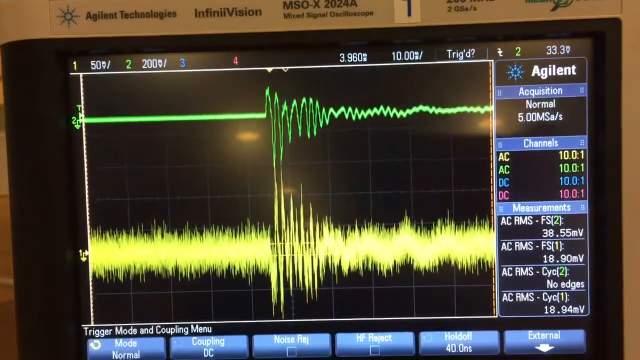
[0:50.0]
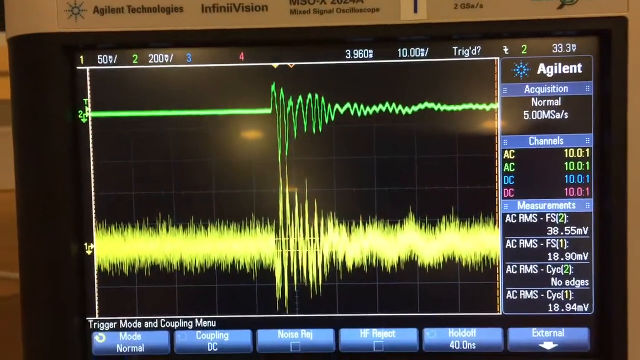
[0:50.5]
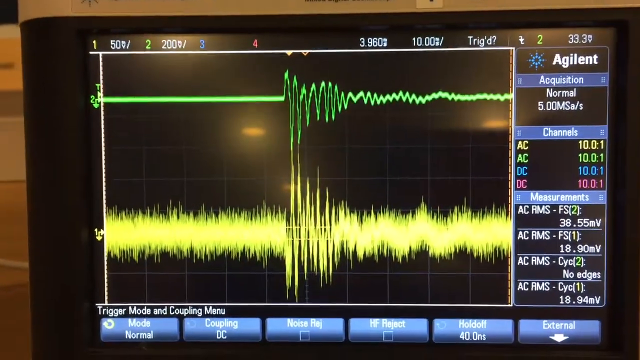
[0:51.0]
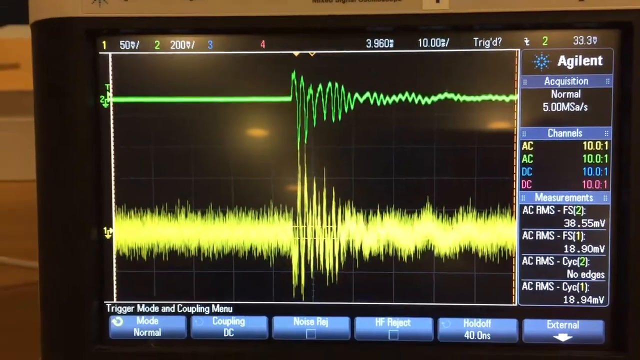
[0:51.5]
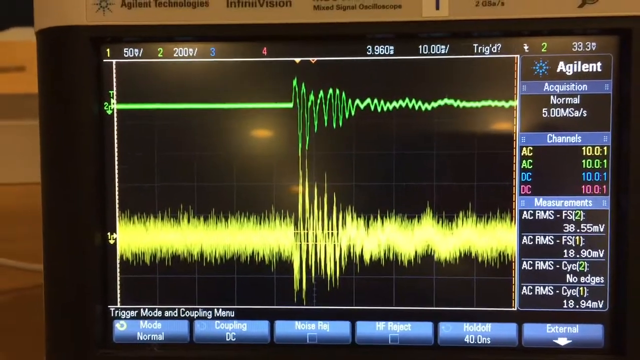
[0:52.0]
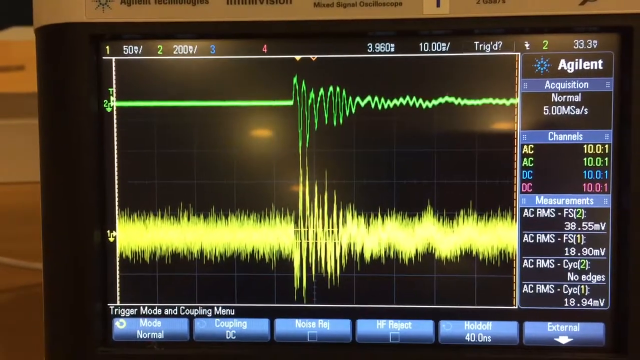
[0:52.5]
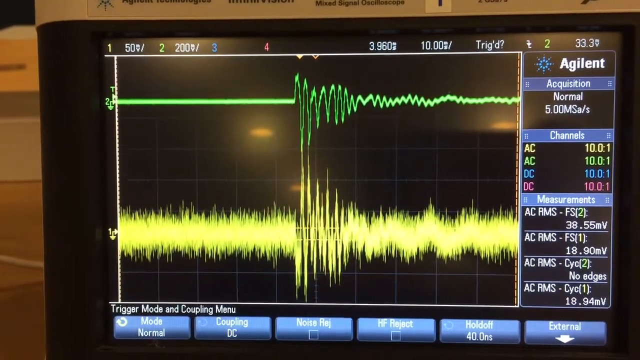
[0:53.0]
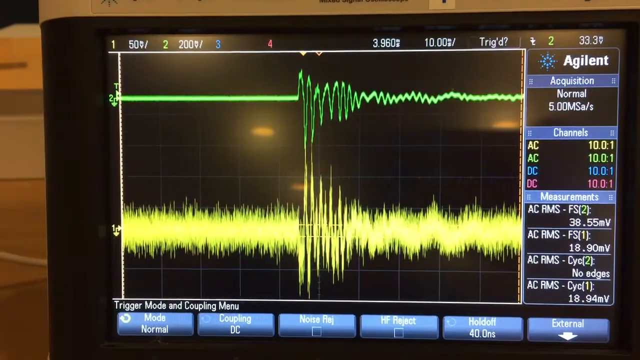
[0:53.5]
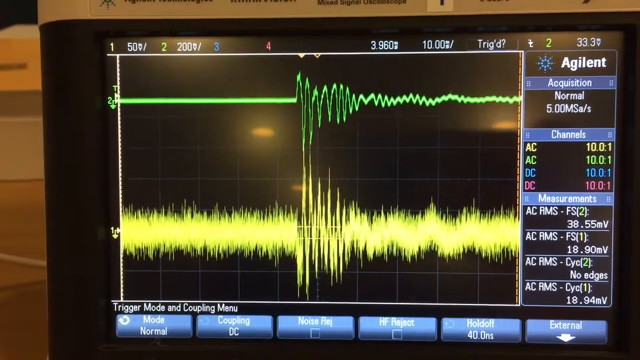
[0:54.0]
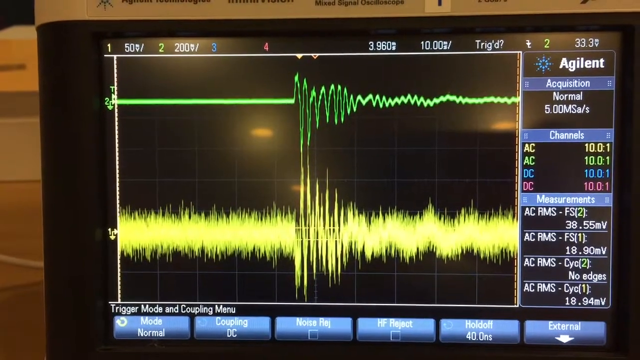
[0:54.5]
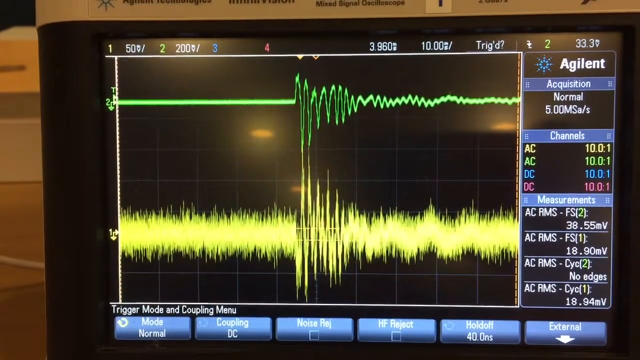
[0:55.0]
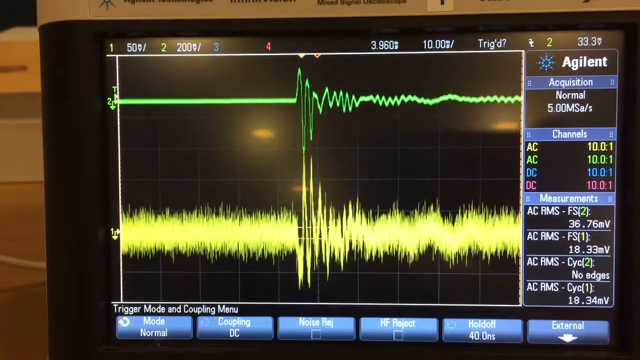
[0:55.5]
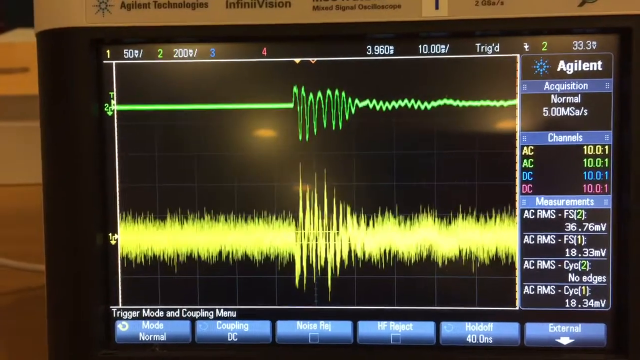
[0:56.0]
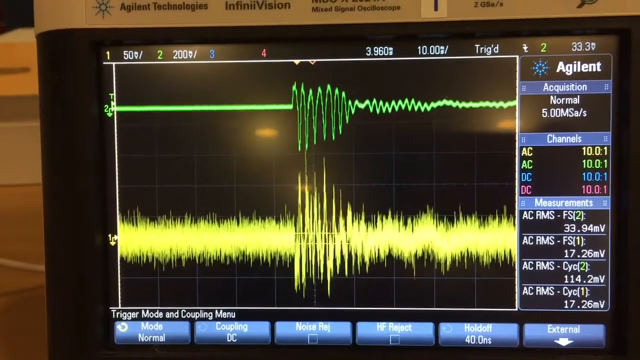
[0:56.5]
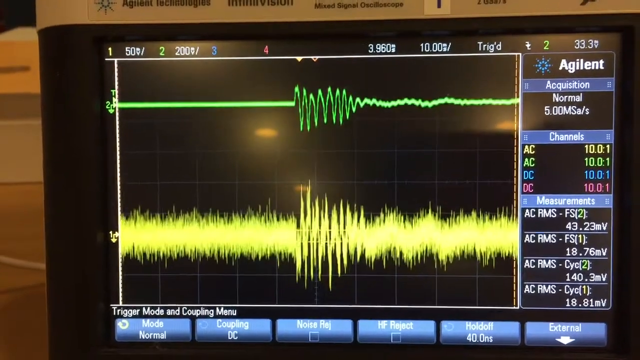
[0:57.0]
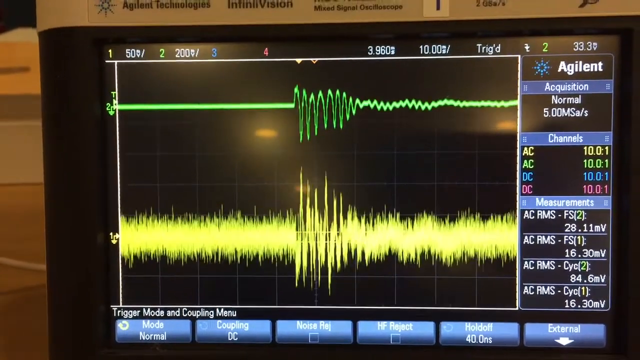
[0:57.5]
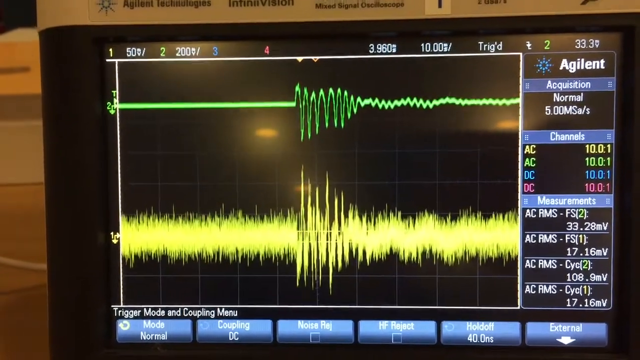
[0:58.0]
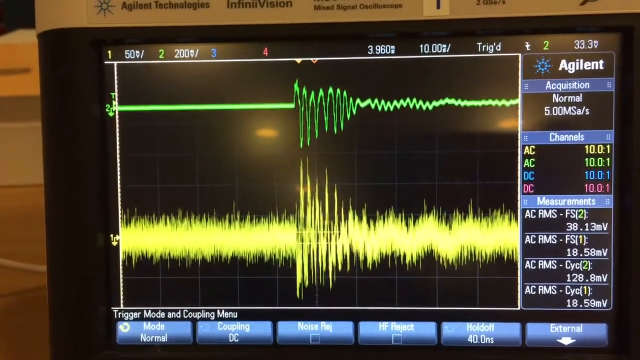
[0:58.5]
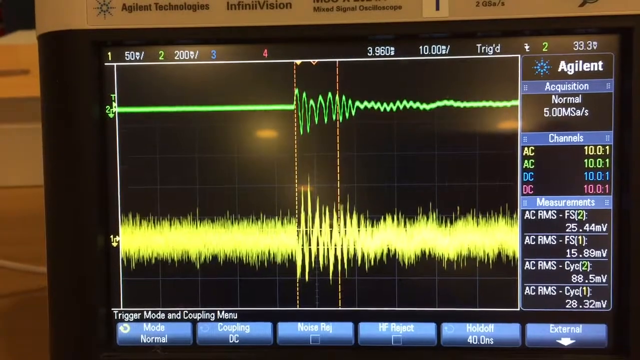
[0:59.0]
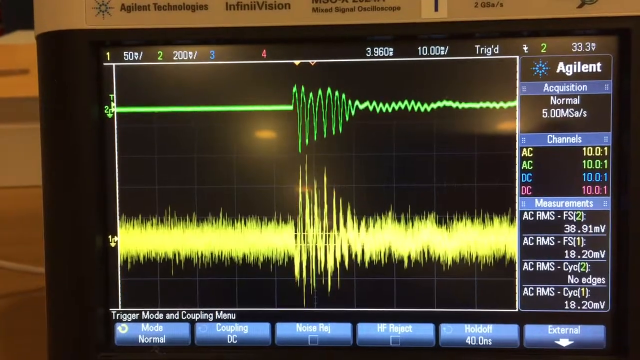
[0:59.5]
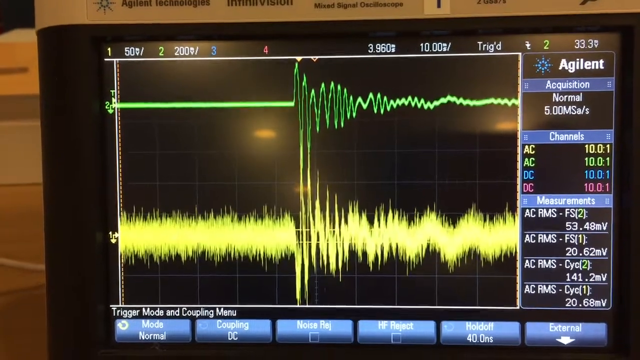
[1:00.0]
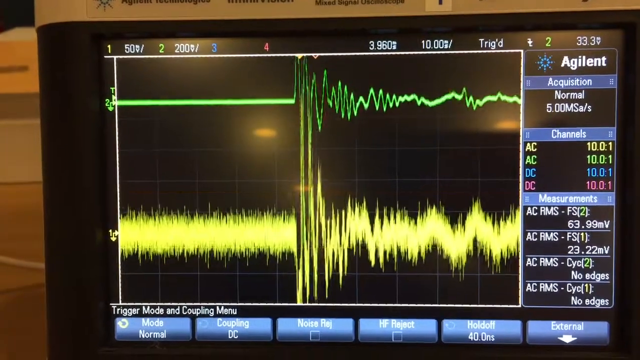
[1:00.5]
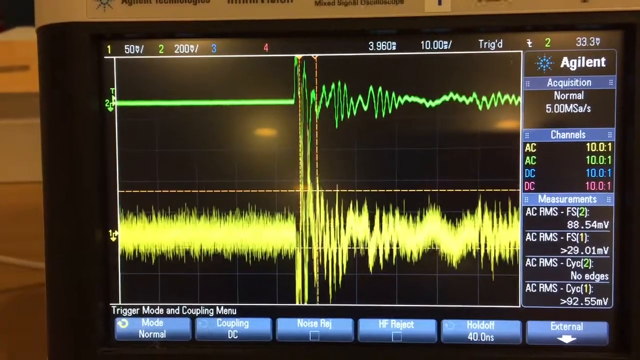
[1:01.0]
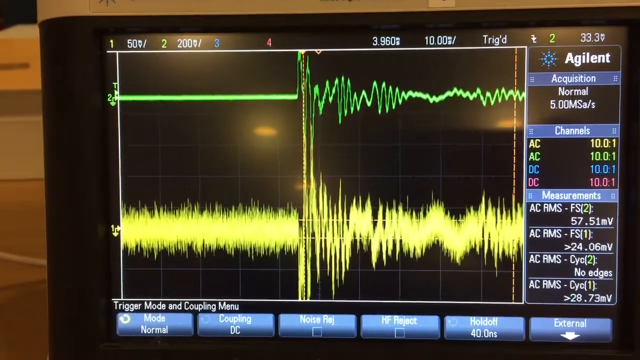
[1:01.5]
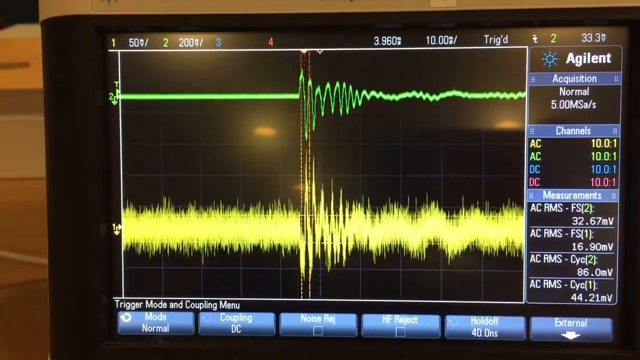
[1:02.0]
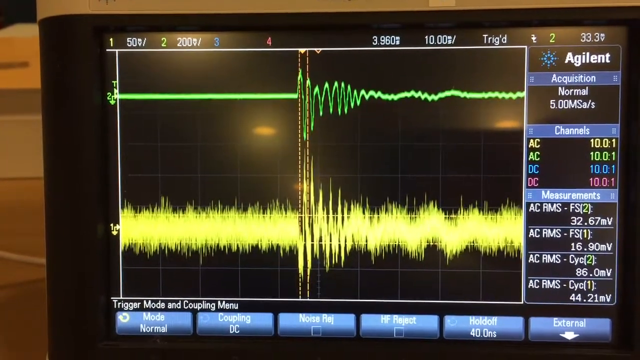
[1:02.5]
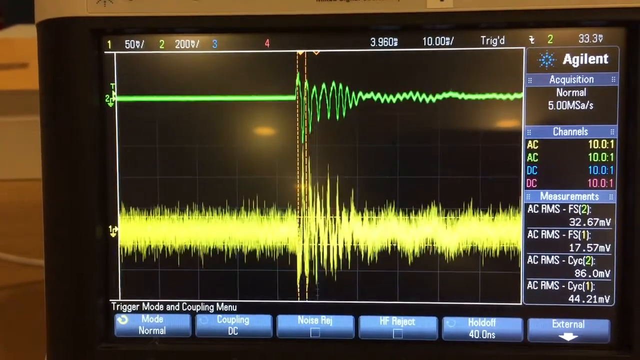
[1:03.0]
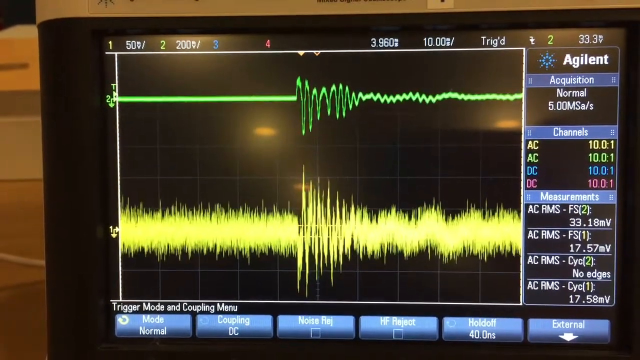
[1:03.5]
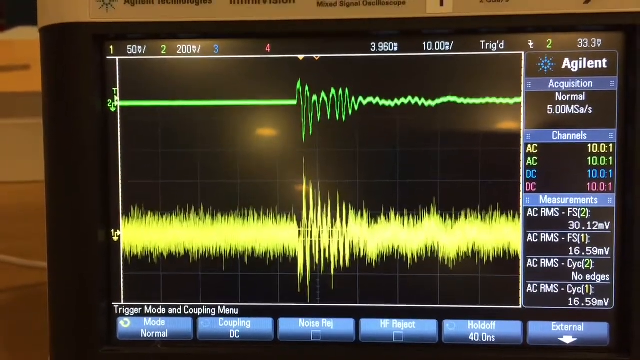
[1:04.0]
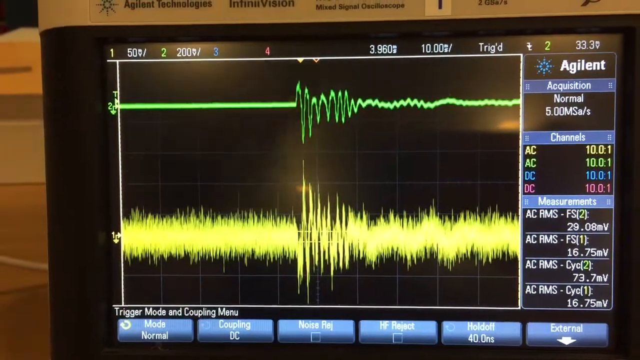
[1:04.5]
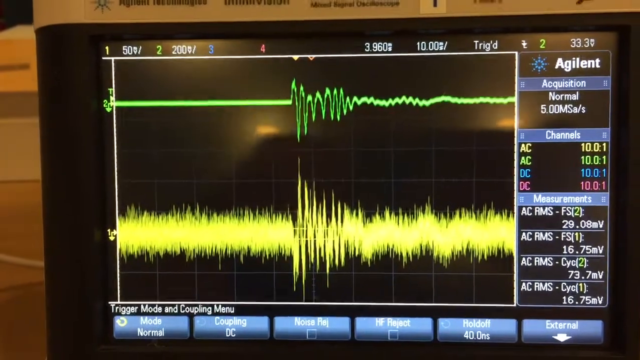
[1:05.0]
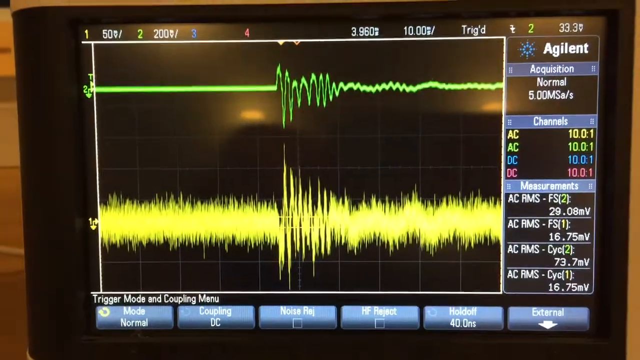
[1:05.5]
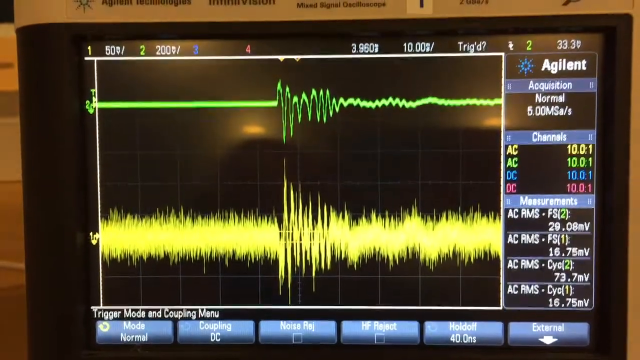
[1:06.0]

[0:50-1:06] The waves change, and the changing frequency can be seen in the measurement section. The man apparently is showing the changes in the frequency. The AC RMS measurements change, shown as decimal values in mV. The channels shown appear the same as before, "AC 10.0.1" and "DC 10.0.1". Some other options are available at the bottom of the screen.